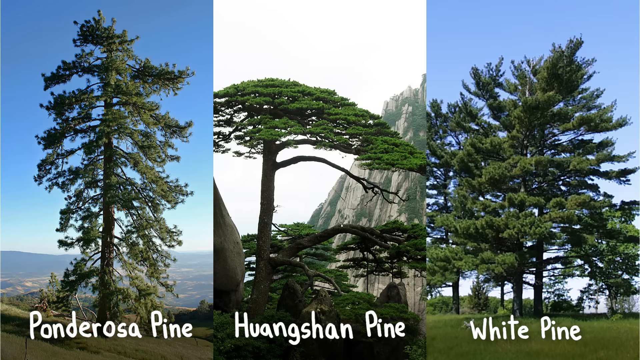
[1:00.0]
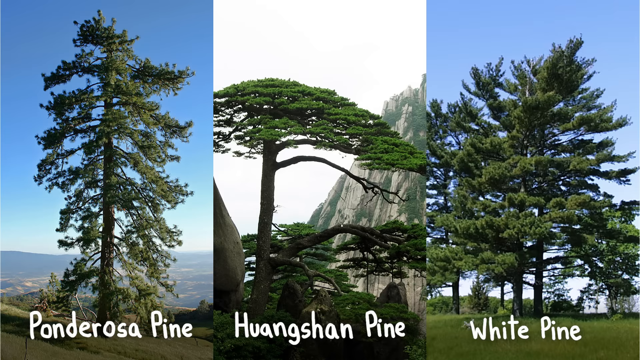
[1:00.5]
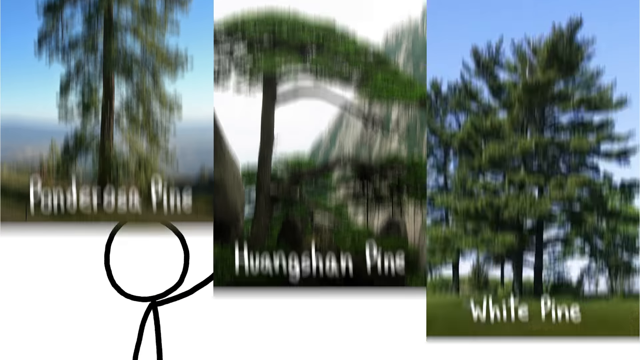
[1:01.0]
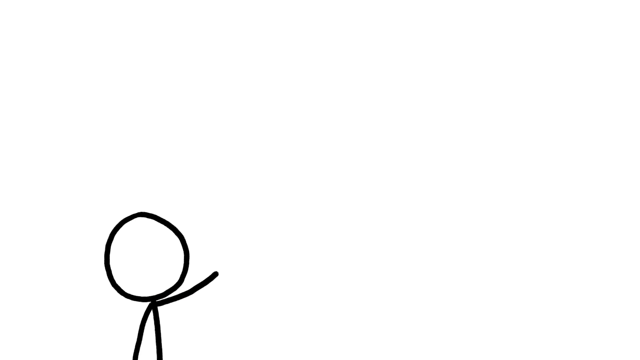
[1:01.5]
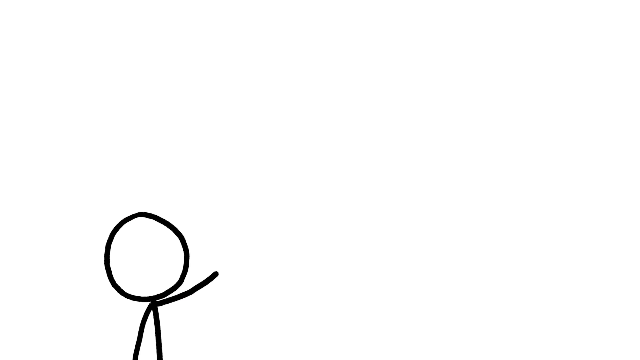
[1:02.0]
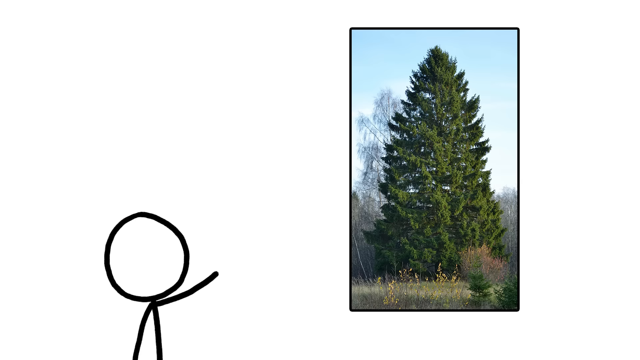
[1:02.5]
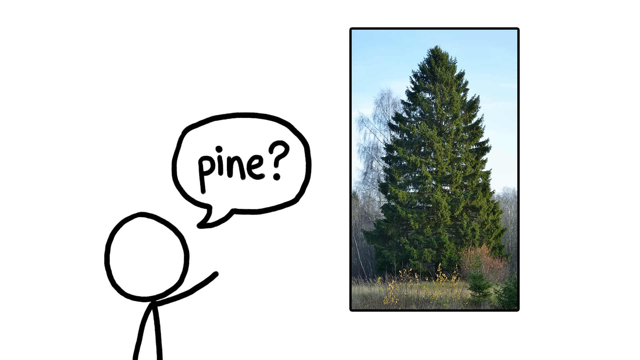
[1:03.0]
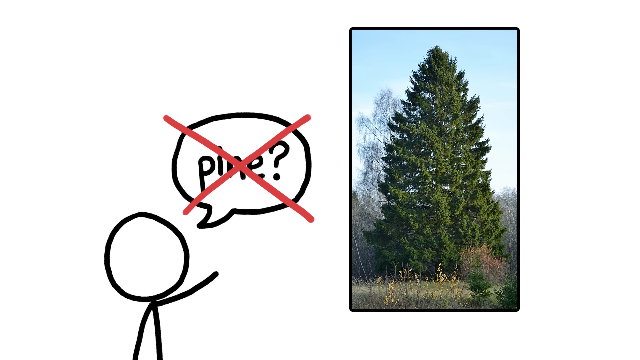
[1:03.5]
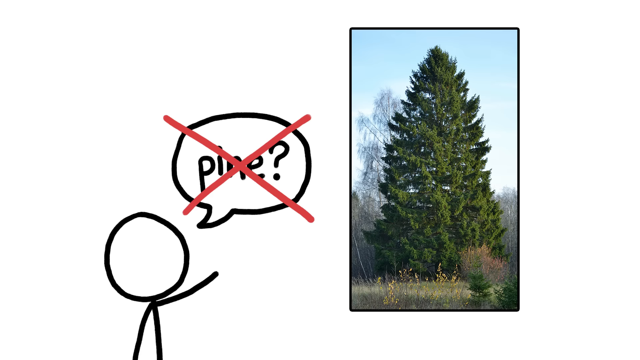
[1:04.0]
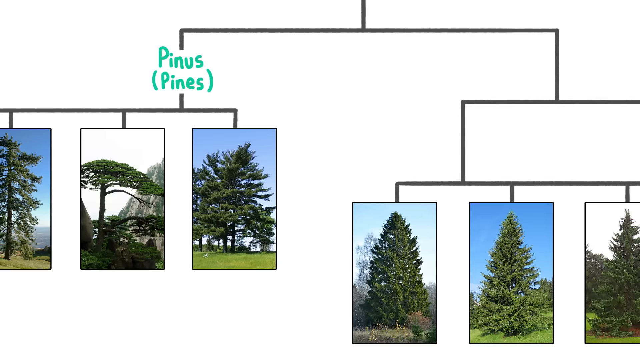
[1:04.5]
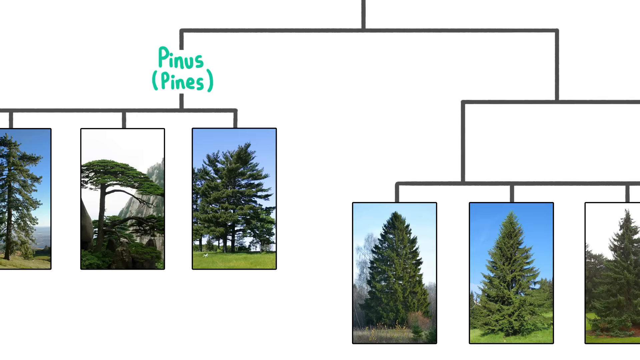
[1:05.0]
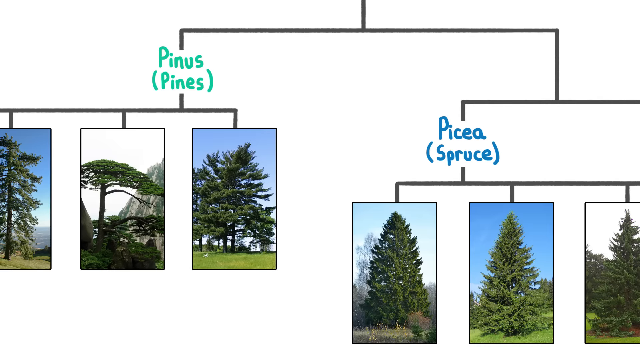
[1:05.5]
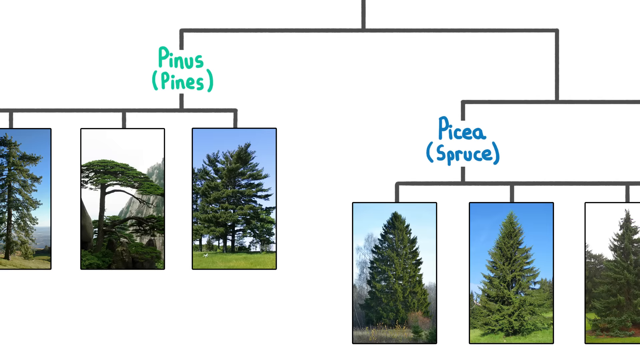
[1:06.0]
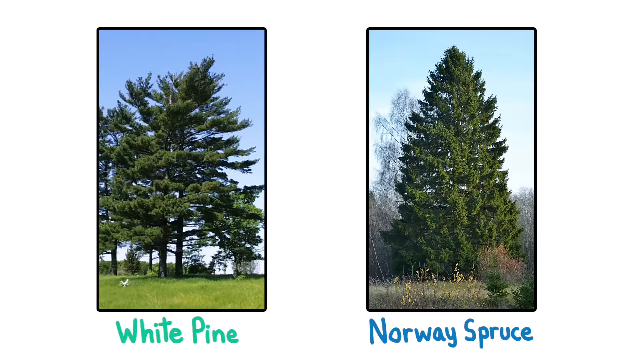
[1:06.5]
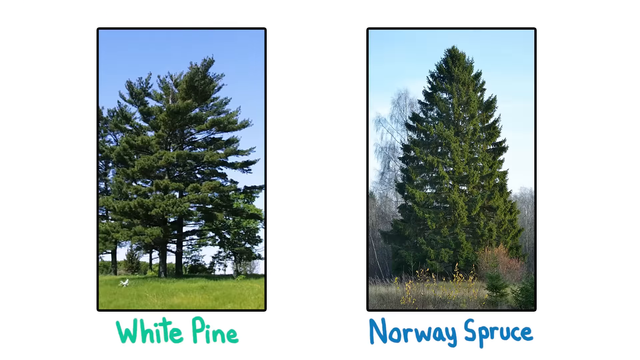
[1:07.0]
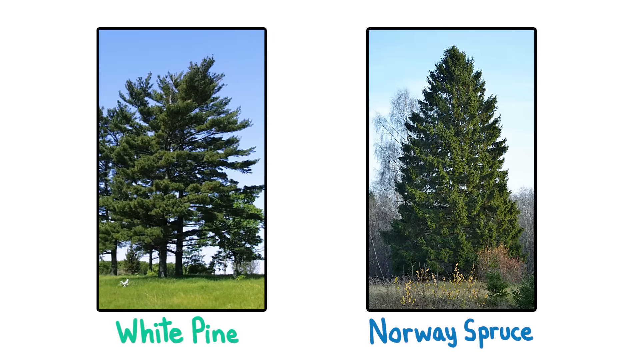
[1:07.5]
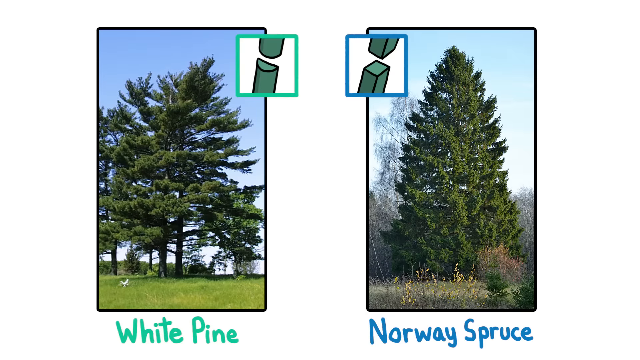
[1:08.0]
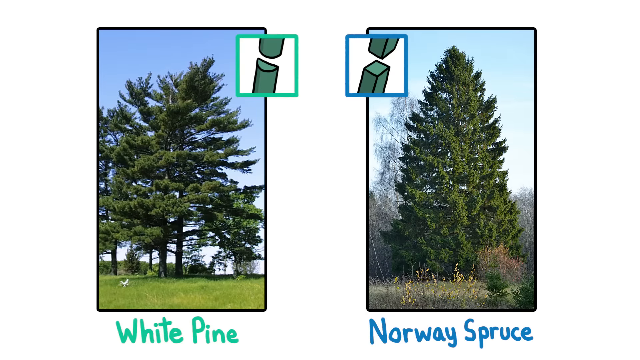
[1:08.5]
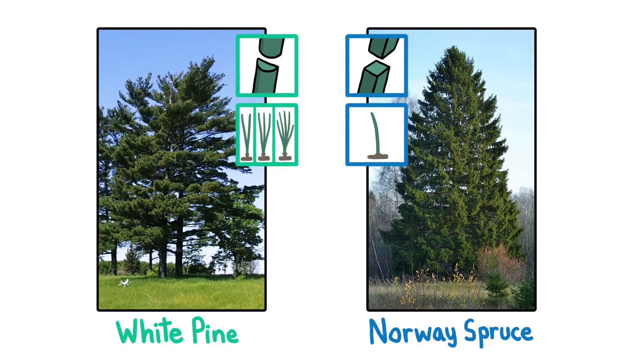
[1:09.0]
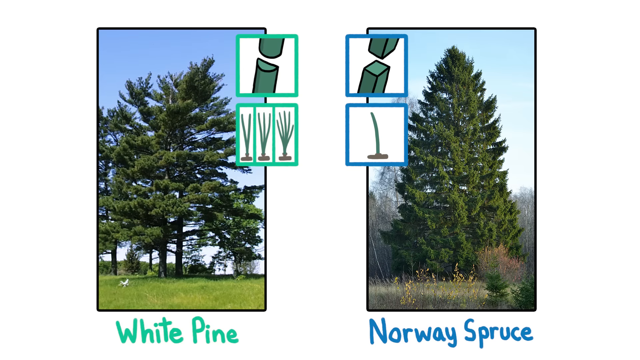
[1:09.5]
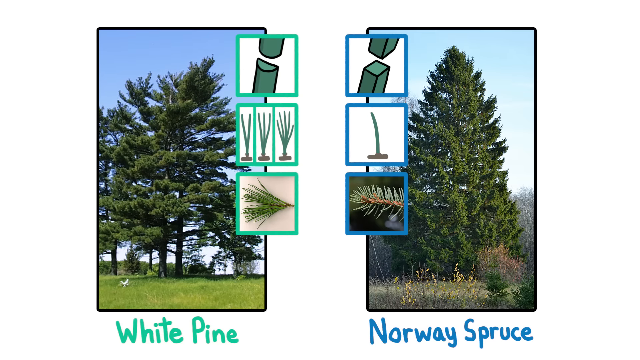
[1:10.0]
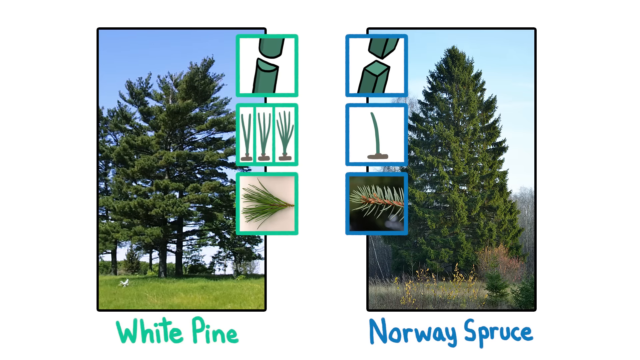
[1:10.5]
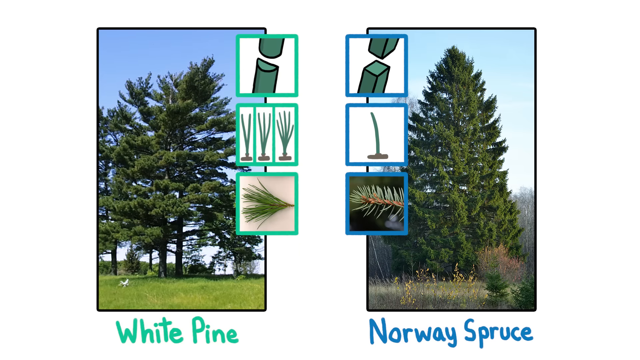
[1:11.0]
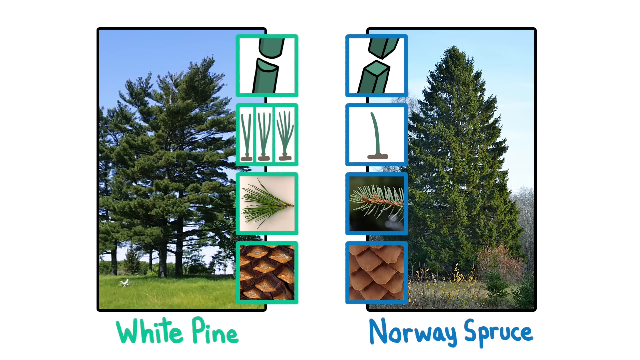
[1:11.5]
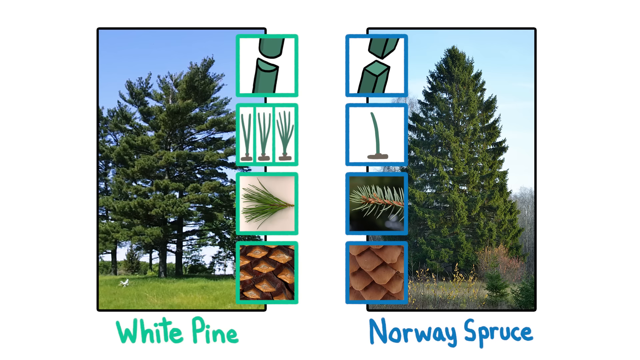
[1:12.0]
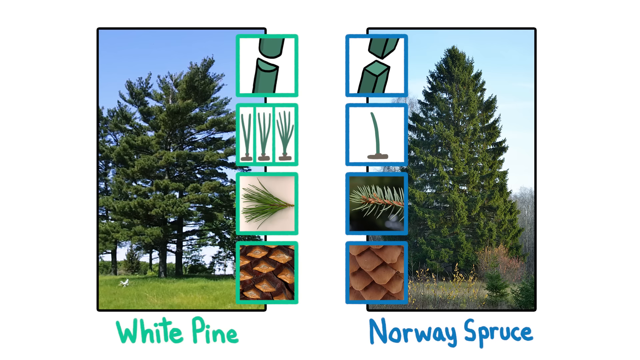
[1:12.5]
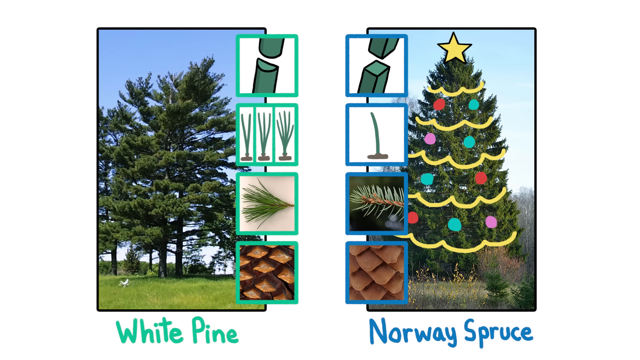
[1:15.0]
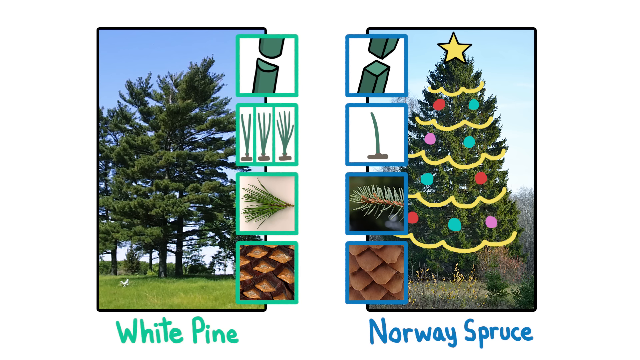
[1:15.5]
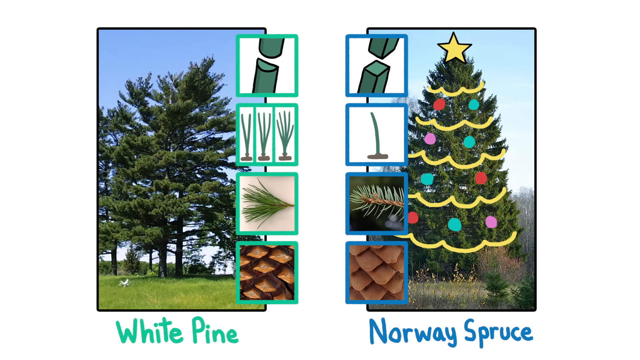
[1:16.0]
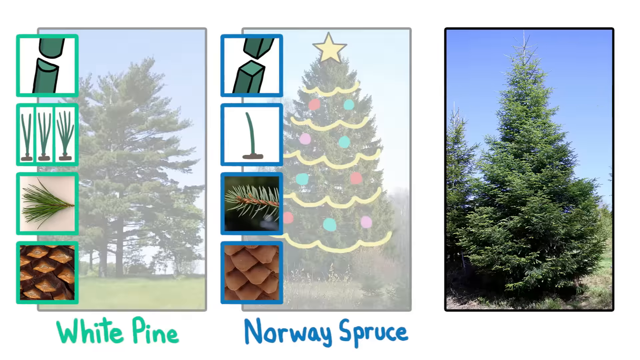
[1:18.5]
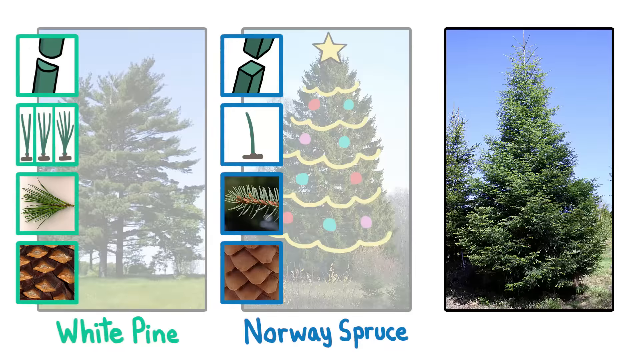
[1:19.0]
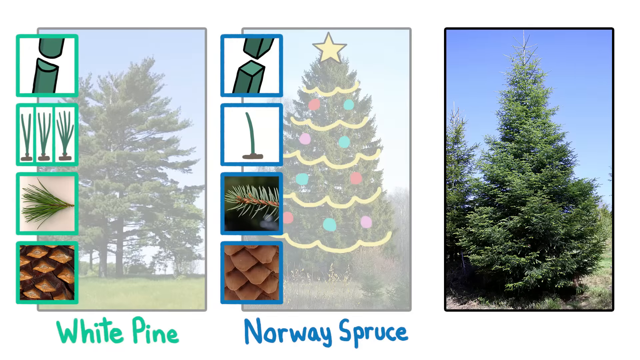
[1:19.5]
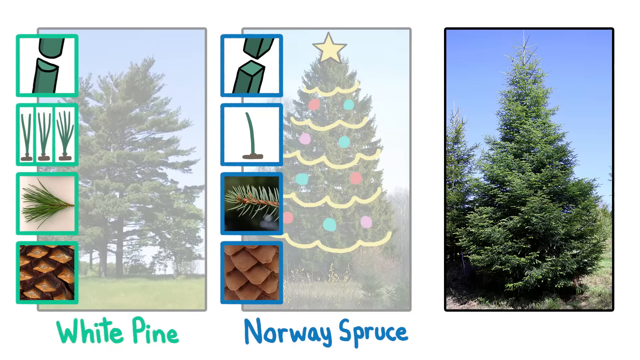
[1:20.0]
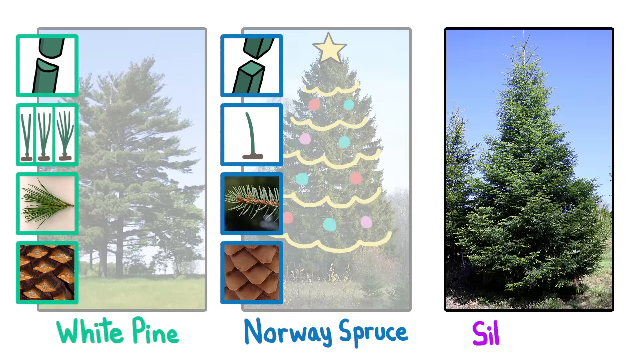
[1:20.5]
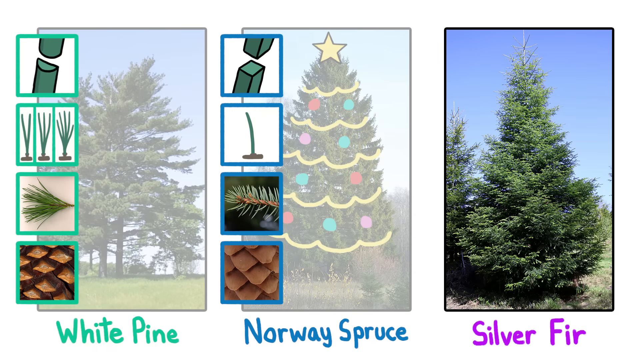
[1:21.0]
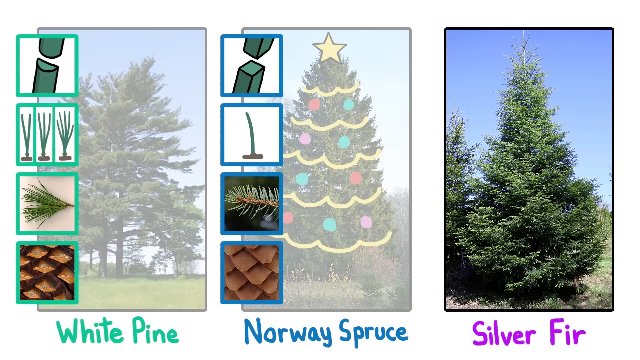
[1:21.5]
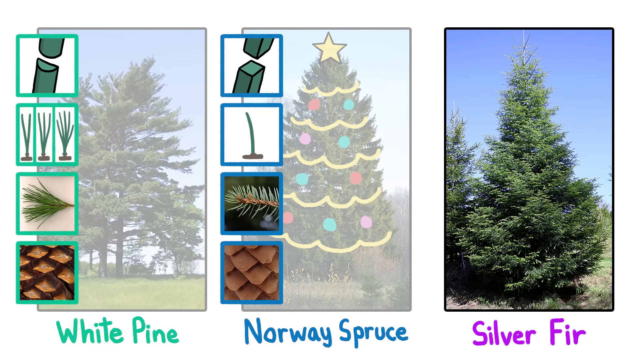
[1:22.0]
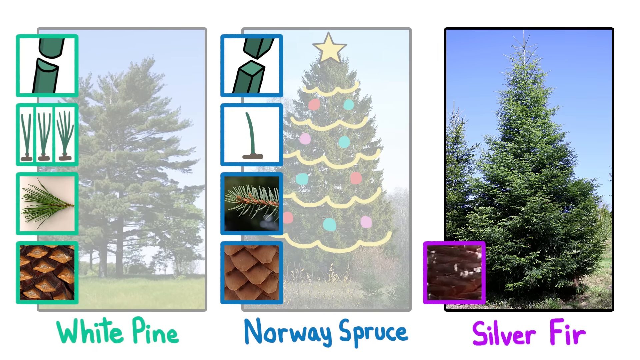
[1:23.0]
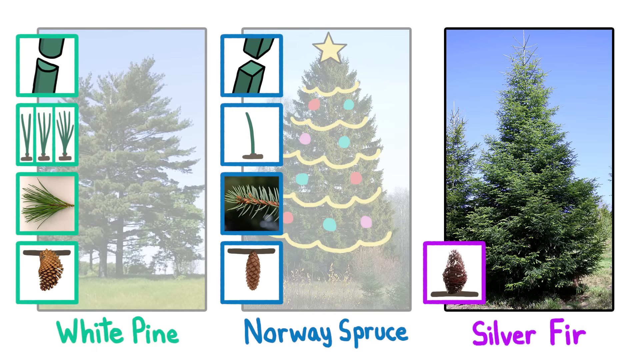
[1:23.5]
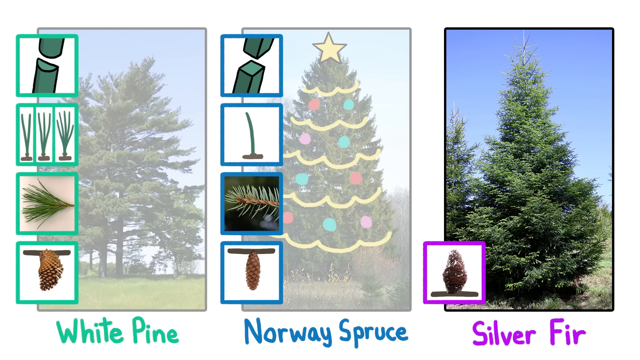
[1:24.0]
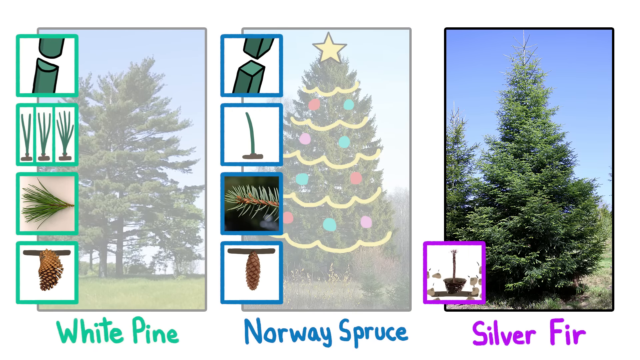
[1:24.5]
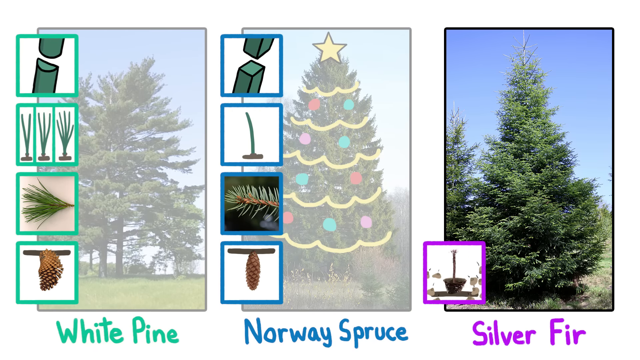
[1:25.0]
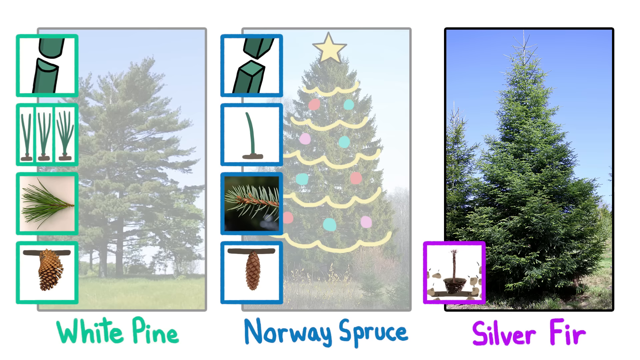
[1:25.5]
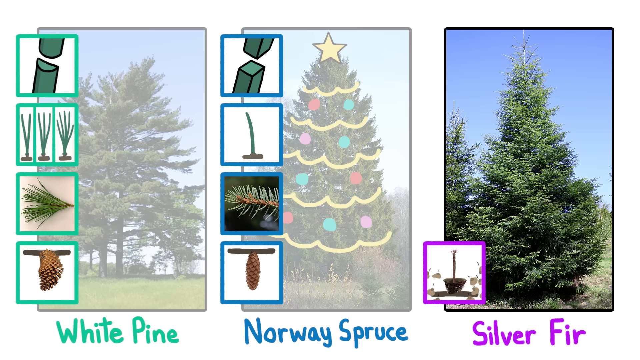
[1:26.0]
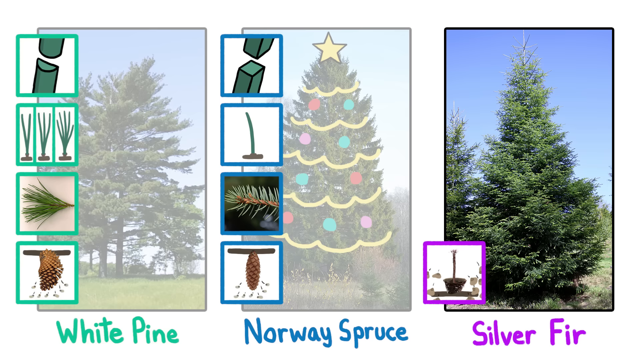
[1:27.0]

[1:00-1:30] A close-up of a ponderosa pine appears on the left, on a hilltop with mountain ranges and a valley behind it. Next is a Huangshan pine on top of a mountain, with a very bonsai-looking shape: limbs growing out, some dying off almost completely, and others leaving large spaces between them. Then a common white pine is shown at the edge of a flat field. A stick figure appears with a bubble pointing at a big, tall cedar tree that says "not a pine". A picture of a pine tree growing in a very irregular shape is shown next to a Norway spruce growing in a very pyramid shape. The needle pattern, needle shape and arrangement of the needles on the tree are shown, none matching the pine's pattern, and the pine cone shape on the Norway spruce is different too. At the end, a silver fir is shown.